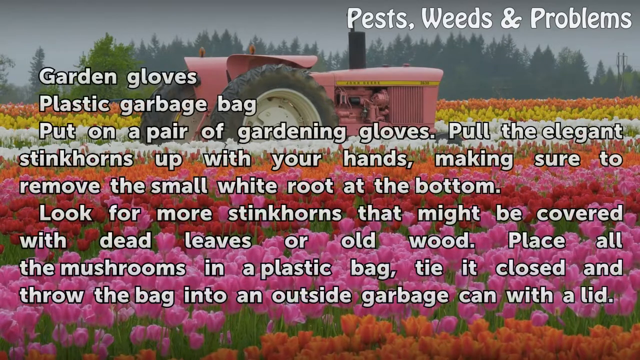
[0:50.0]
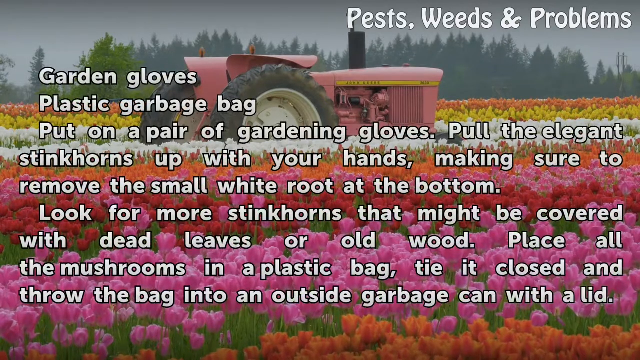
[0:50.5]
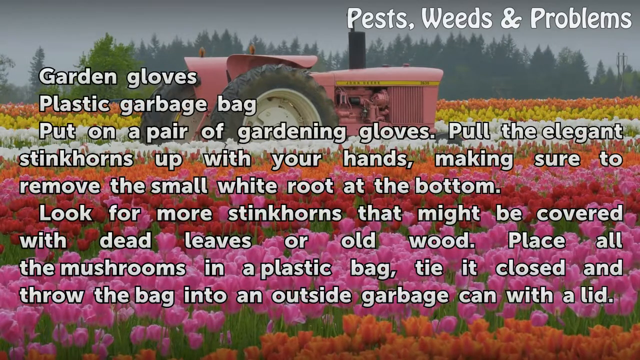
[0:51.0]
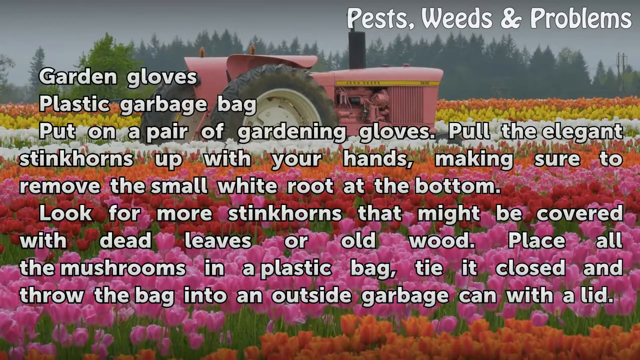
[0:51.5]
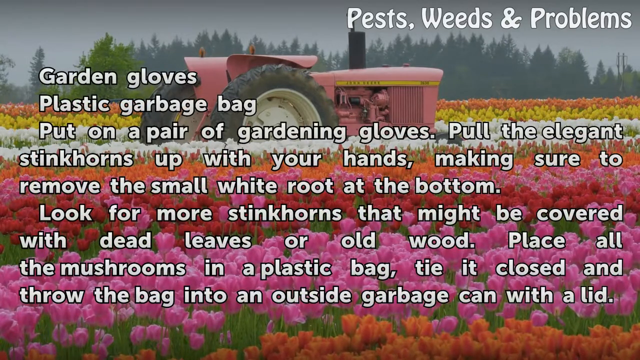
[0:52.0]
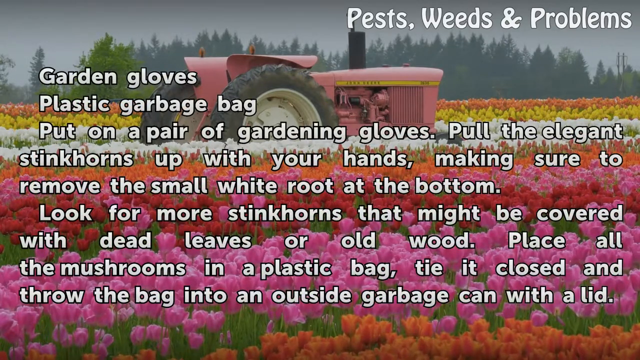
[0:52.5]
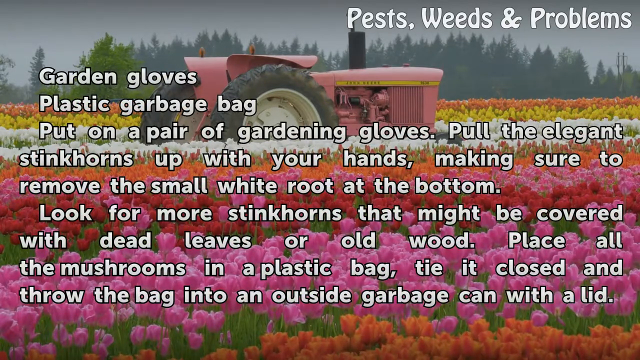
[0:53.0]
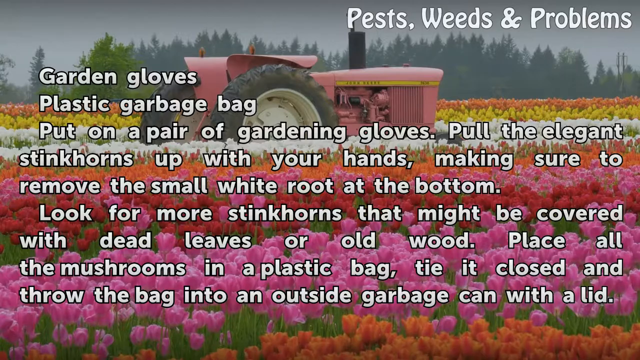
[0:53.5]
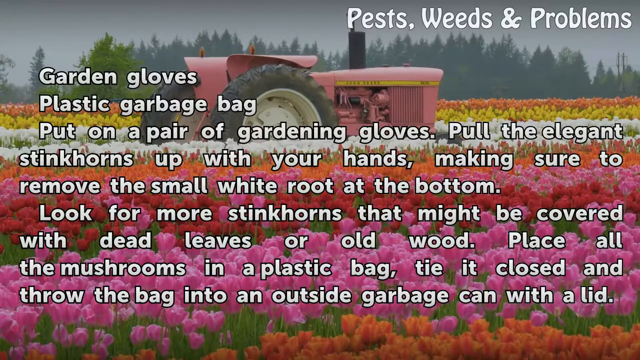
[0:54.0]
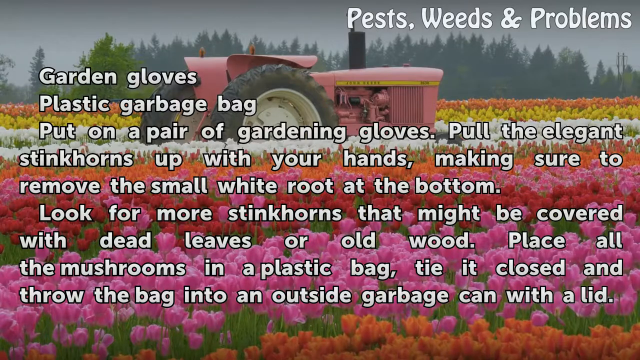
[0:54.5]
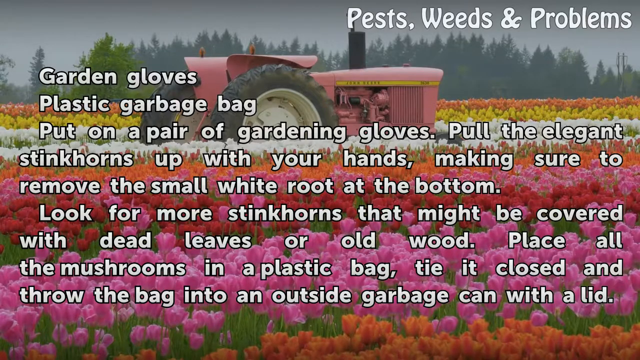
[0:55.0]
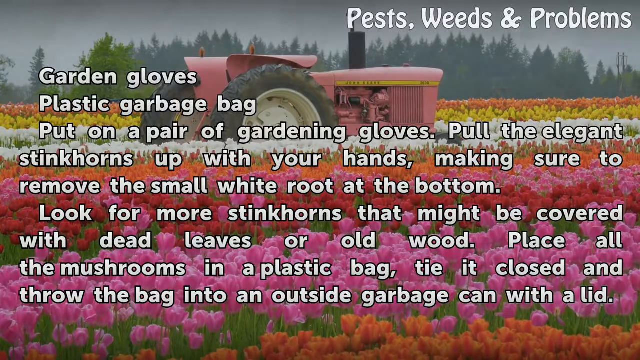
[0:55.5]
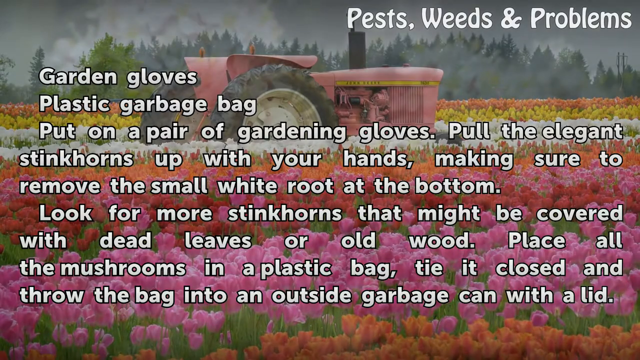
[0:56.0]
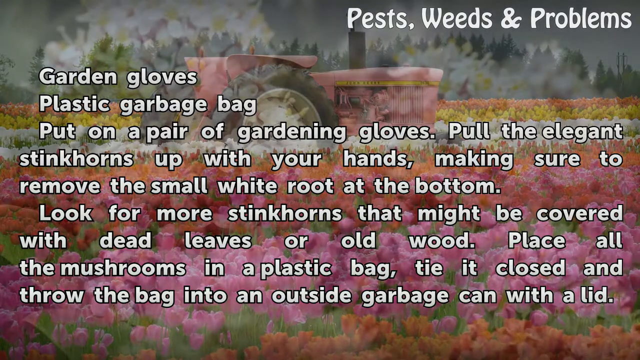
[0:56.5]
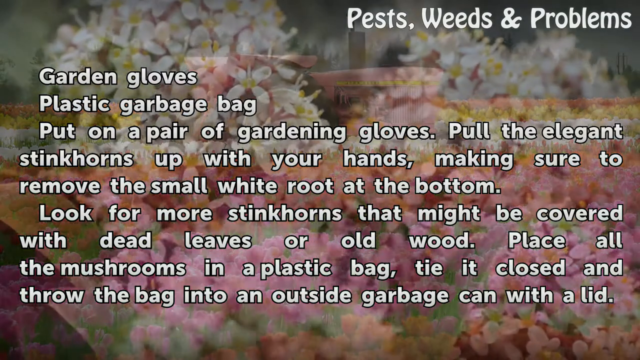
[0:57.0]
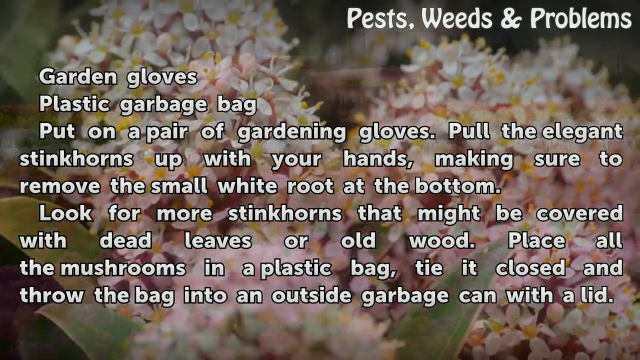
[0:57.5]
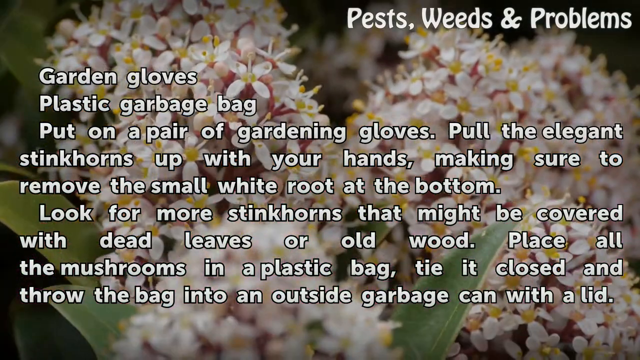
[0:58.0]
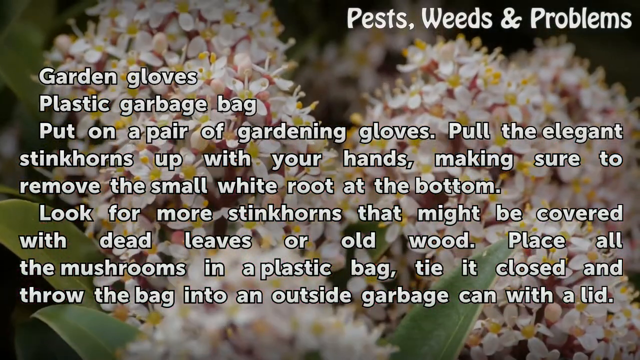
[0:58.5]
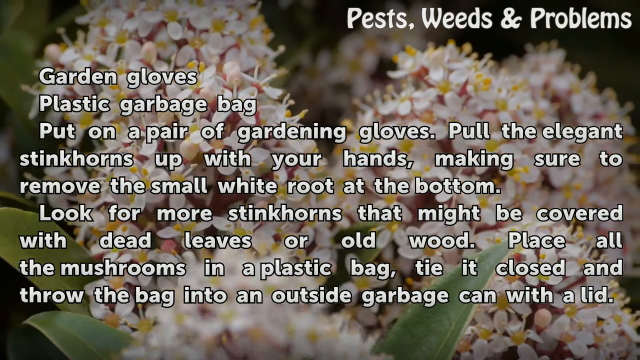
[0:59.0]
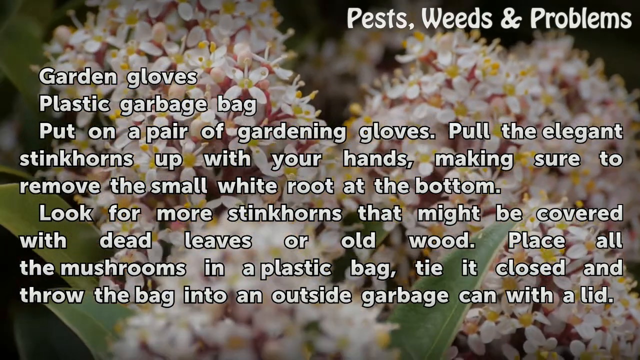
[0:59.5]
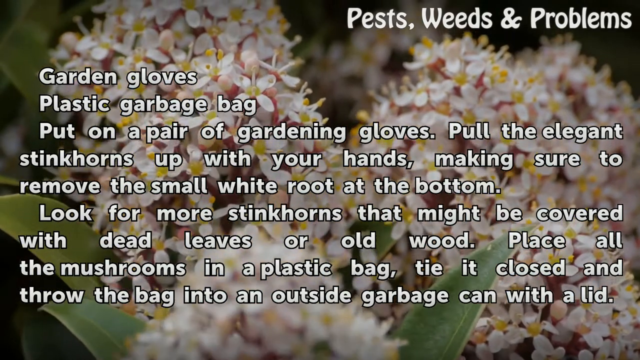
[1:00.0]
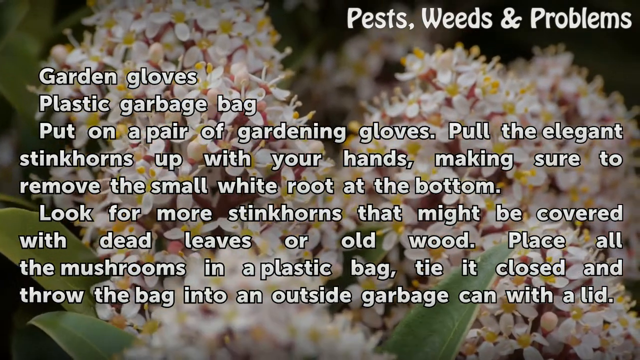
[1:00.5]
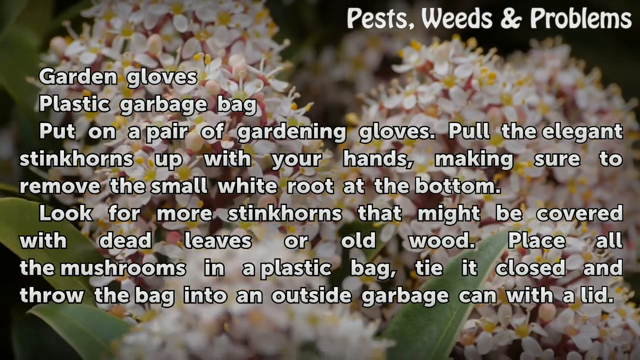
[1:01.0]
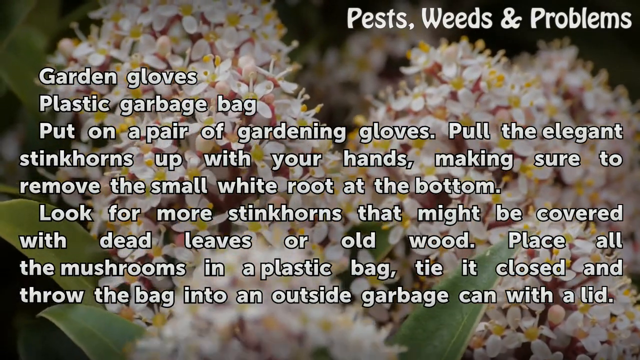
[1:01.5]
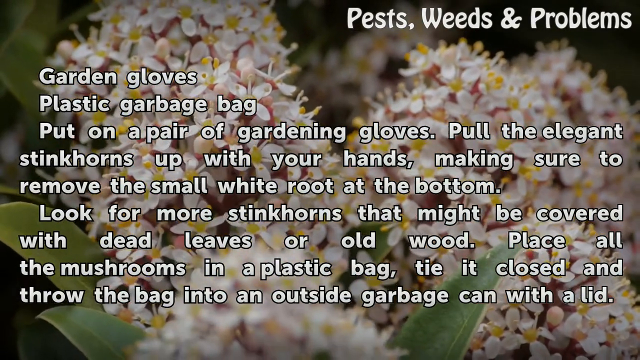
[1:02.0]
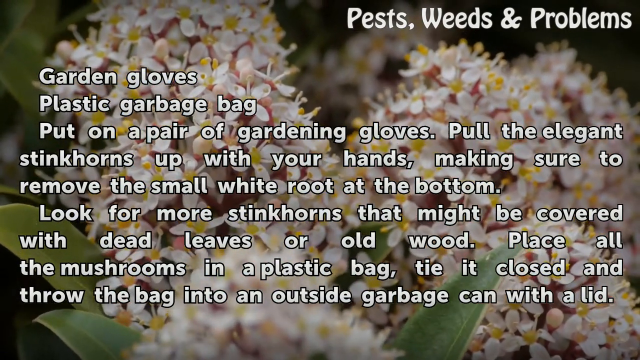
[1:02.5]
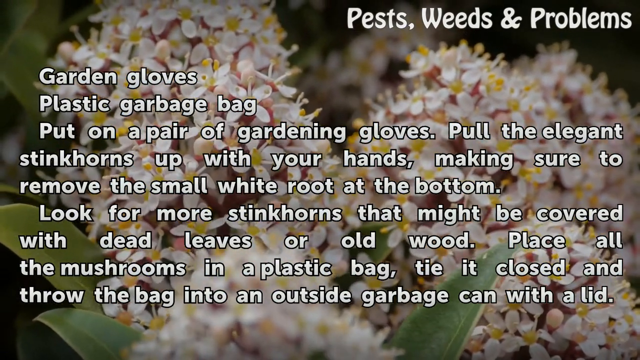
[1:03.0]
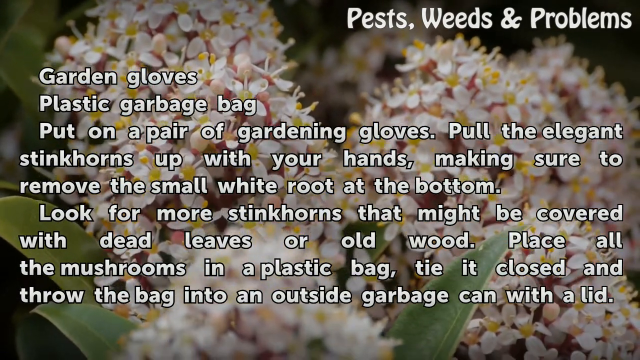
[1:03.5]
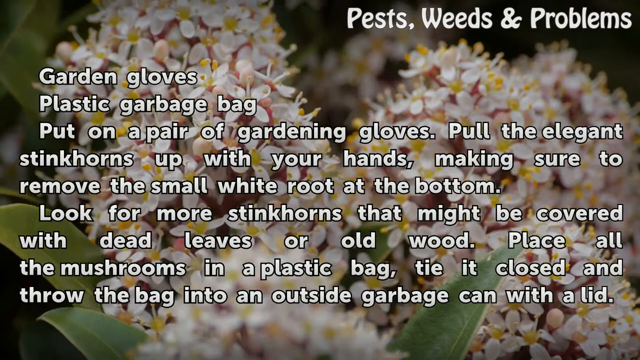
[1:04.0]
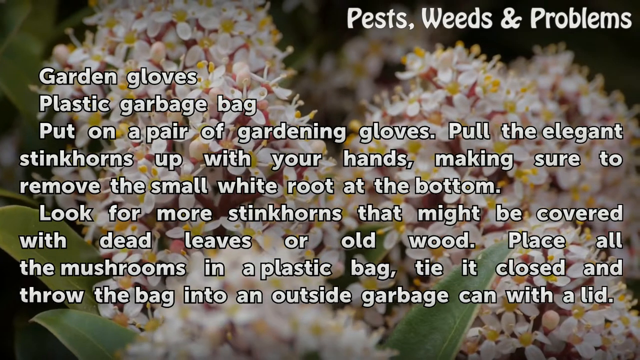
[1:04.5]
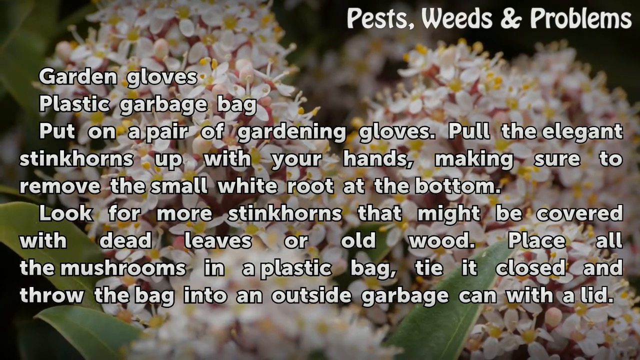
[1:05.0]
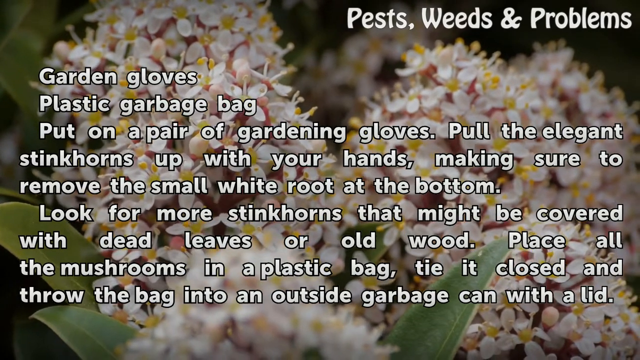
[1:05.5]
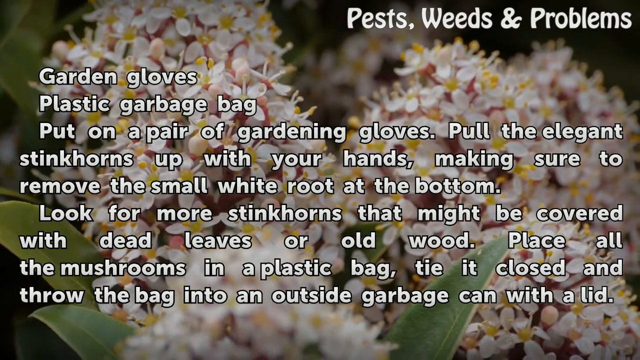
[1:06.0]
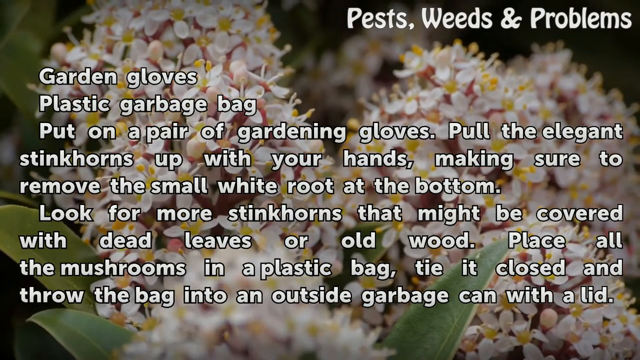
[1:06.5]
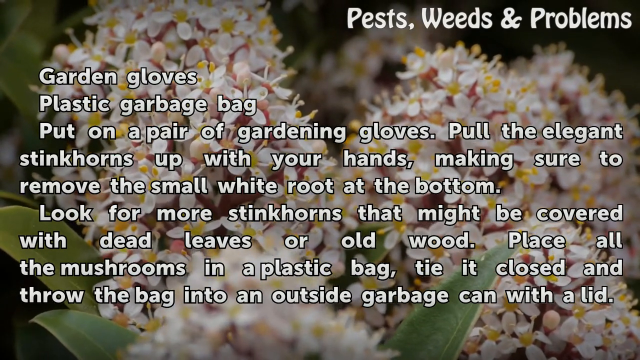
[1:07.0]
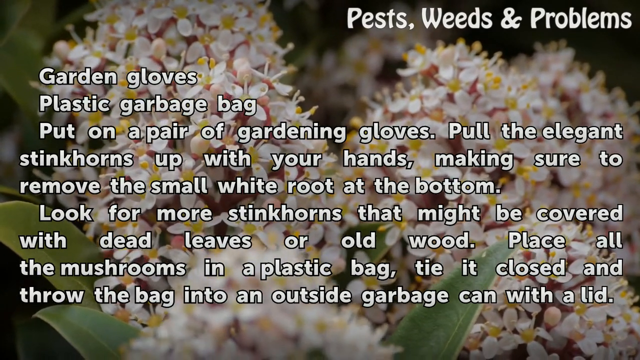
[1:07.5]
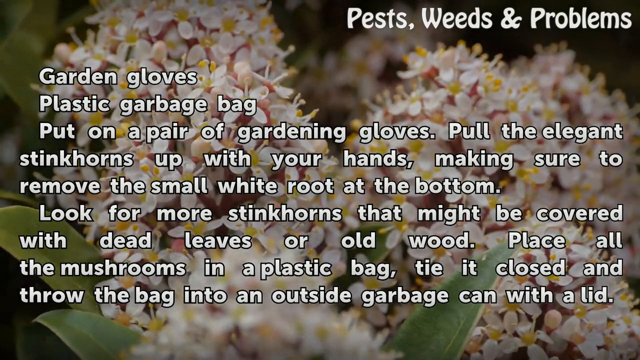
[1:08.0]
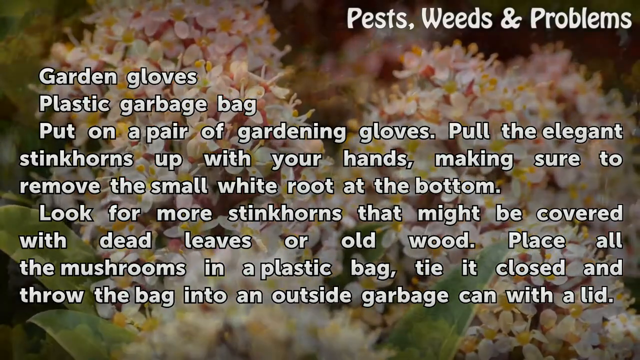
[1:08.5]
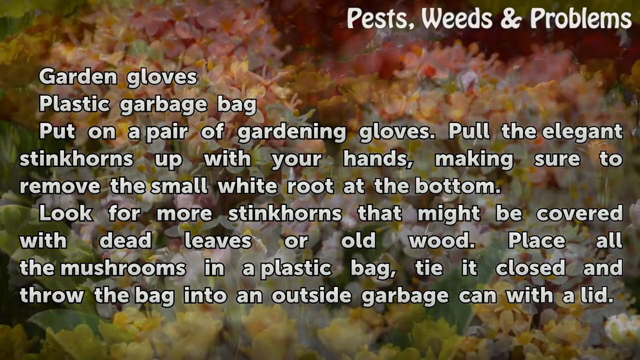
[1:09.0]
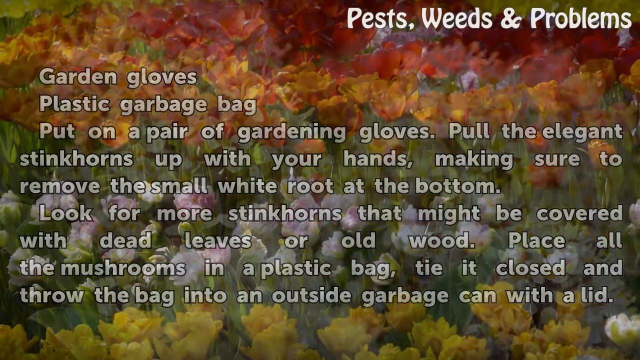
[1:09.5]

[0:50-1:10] The same flowers are in the forefront, in pink, red, orange, white and yellow; they look like tulips, with a pink tractor in the middle of the field. White block letters overlaid on this read: "garden gloves, plastic garbage bags, put on a pair of gardening gloves, pull the elegant stinkhorns up with your hands, making sure to remove the small white root at the bottom. Look for more stinkhorns that might be covered with dead leaves and or old wood. Place all the mushrooms in a plastic bag, tie it closed and throw the bag into an outside garbage can with a lid." The background then changes to white flowers moving in the breeze as the letters go over the top of the screen. The words "pests, weeds and problems" are still in the top right-hand corner.